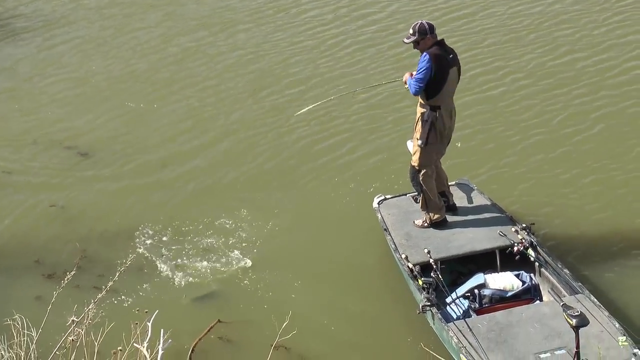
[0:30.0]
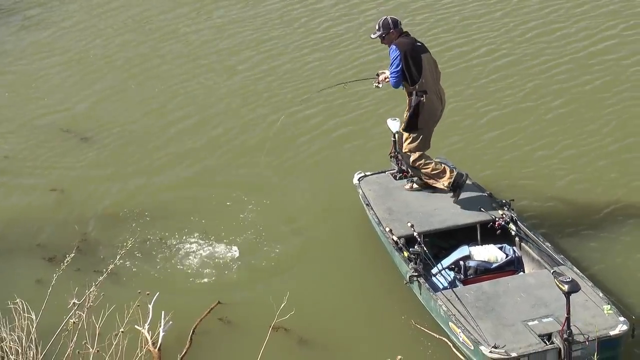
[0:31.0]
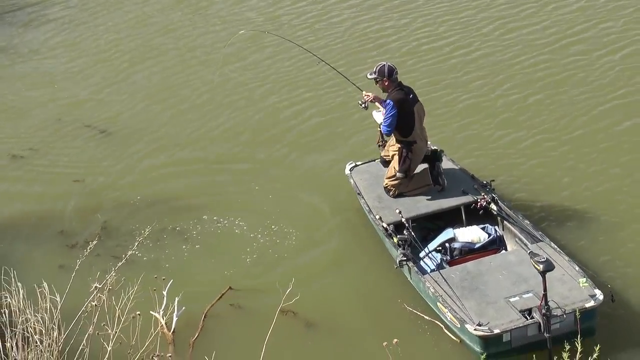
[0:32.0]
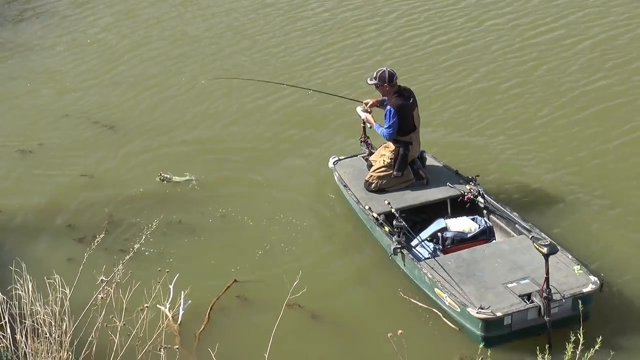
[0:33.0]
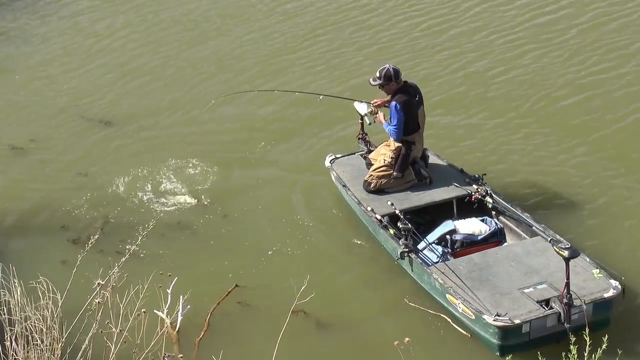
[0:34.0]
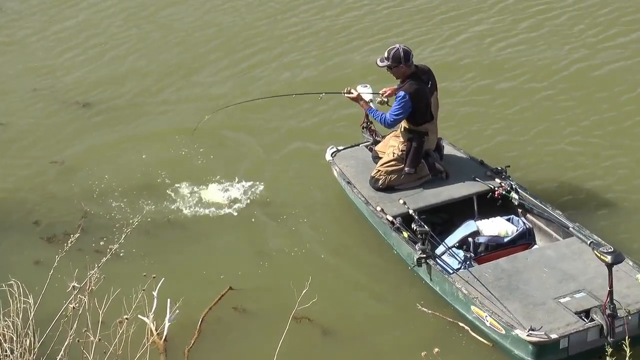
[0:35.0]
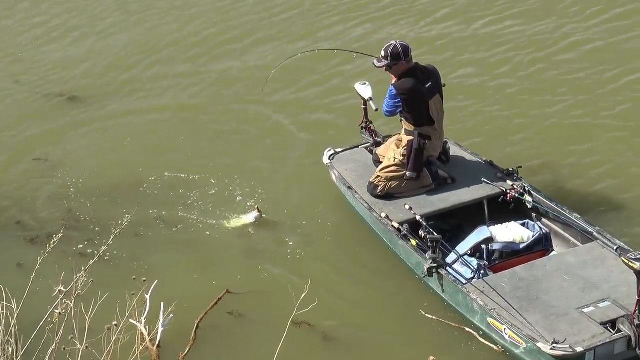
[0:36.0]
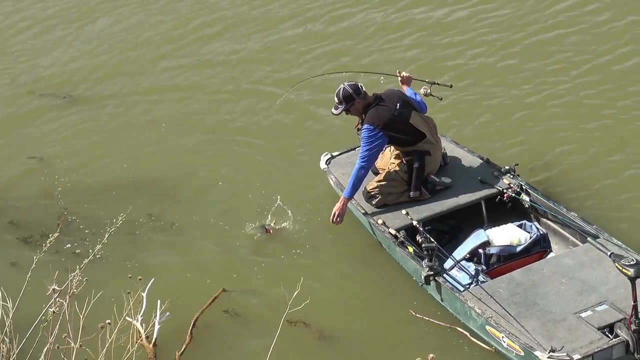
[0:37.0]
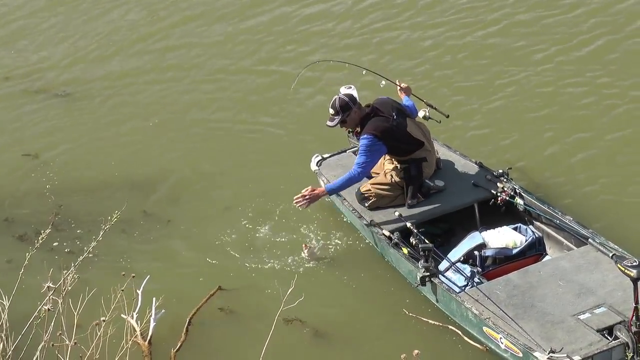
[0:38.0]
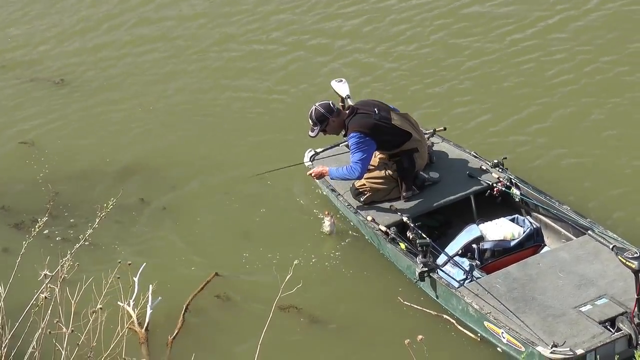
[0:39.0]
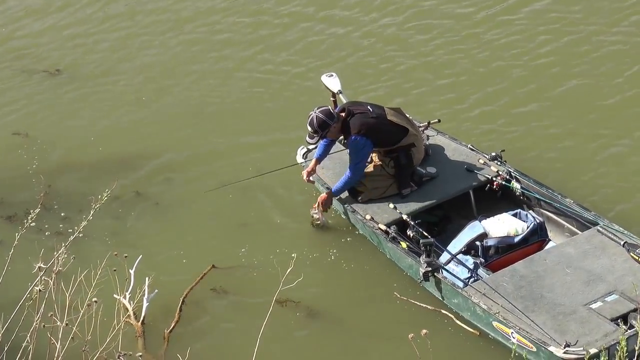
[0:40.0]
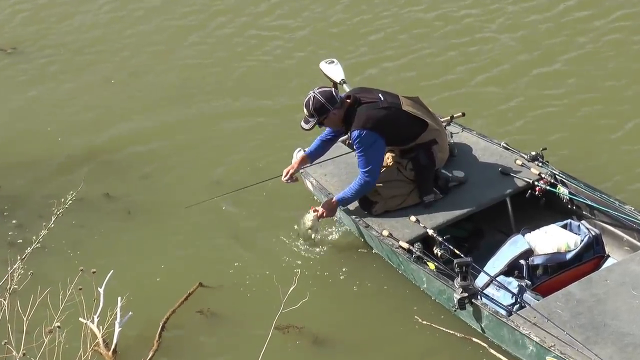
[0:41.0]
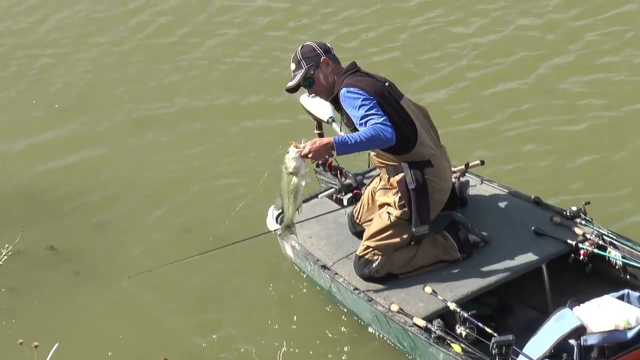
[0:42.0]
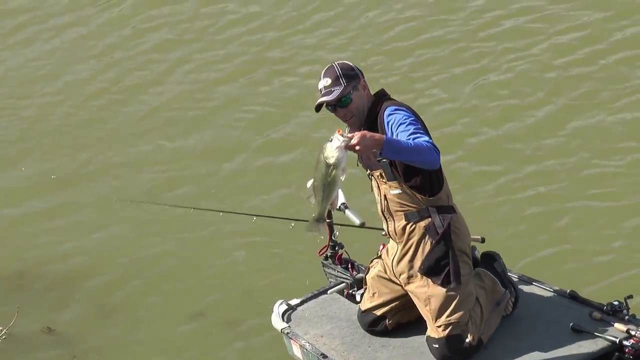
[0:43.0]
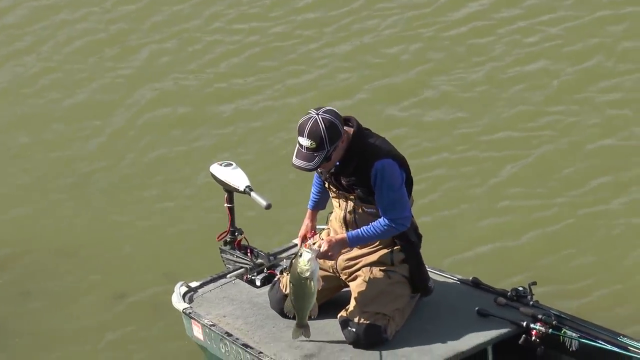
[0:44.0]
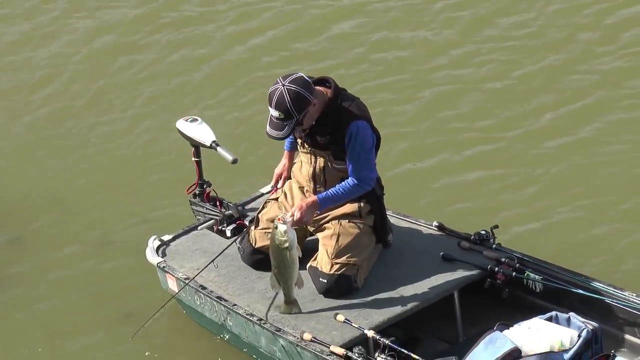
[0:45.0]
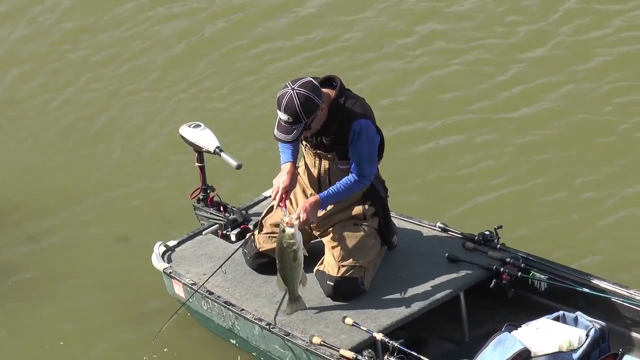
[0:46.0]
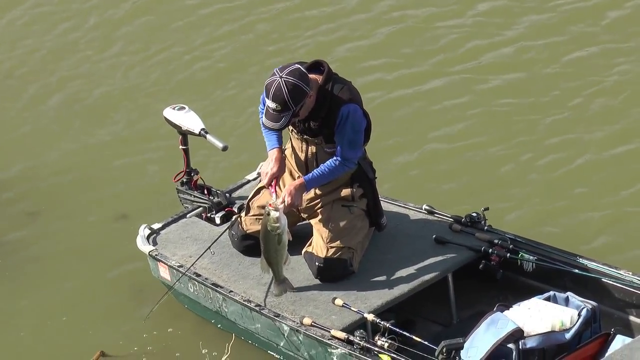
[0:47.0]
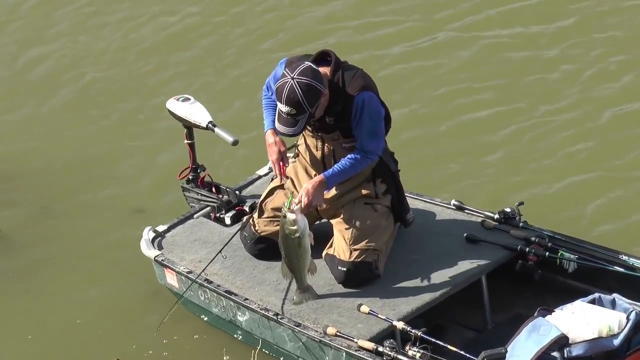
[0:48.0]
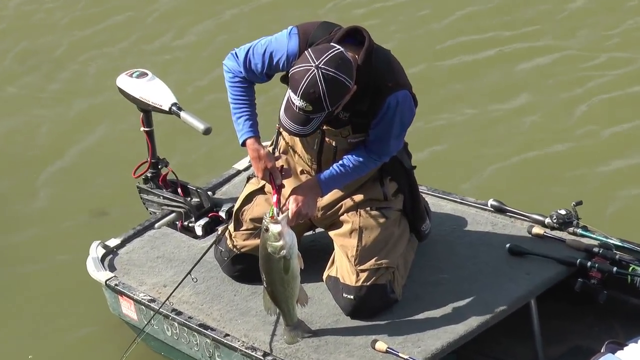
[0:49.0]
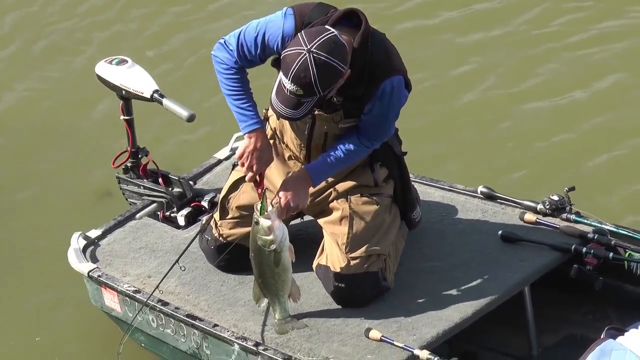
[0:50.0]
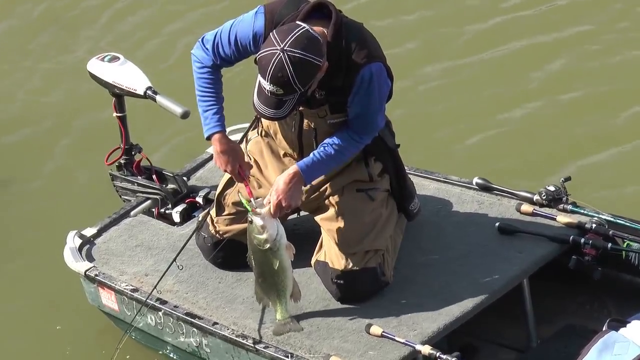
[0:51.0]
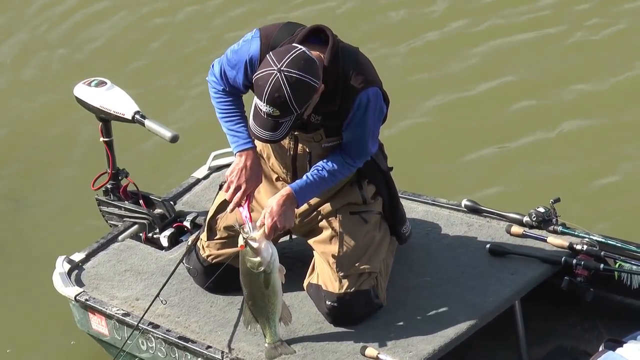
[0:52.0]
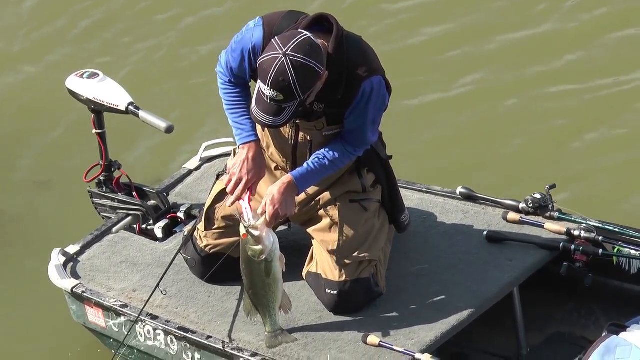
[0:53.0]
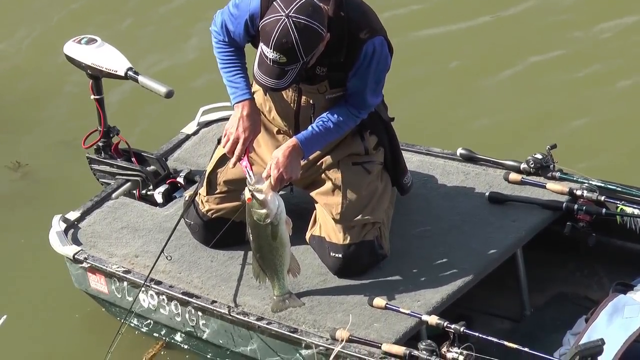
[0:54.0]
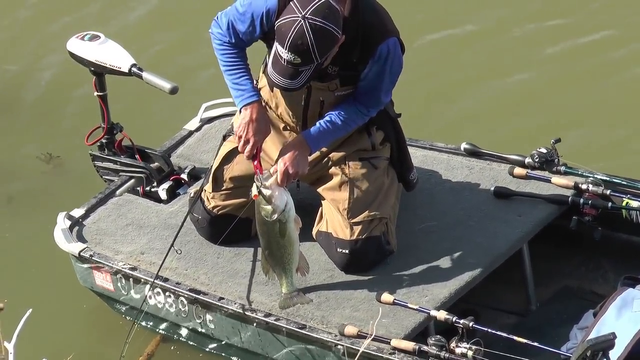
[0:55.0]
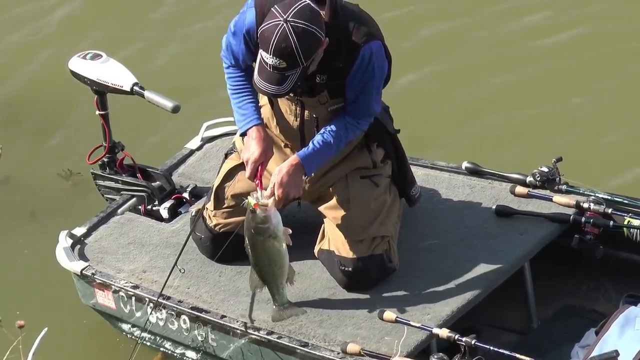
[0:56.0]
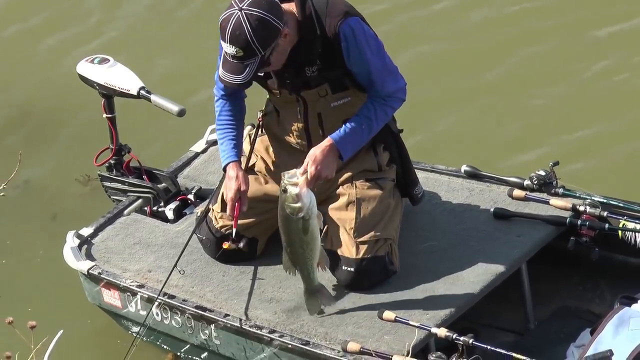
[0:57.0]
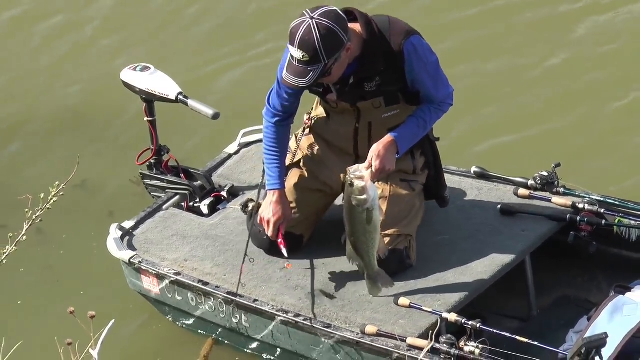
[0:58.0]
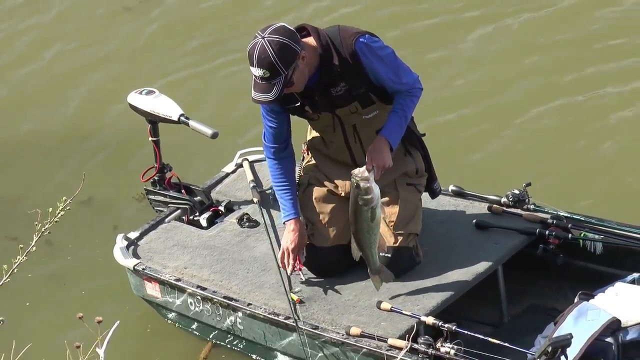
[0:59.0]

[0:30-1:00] The fisherman reels in the fish, which puts up a little fight. He kneels down on the flat part of what is almost like a flat-top half kayak, half john boat and pulls the fish up out of the water. He immediately grabs the fish by the mouth to remove the hook. Black stripes are clearly visible on his baseball cap, and he appears to be wearing knee pads. He reaches in with pliers, kind of fighting to work the hook out of the fish's mouth. The red thing seen bobbing in the water earlier turns out to be part of the lure. The john boat is all gray and looks like it would be used by the military.